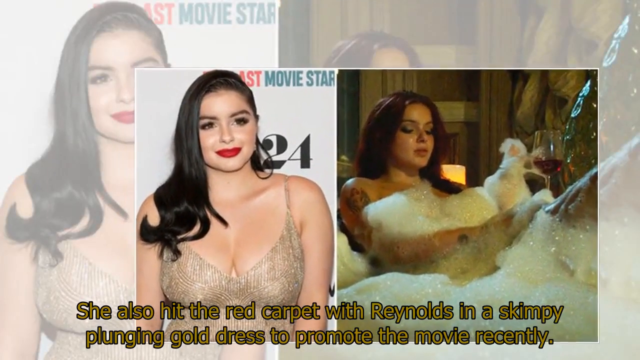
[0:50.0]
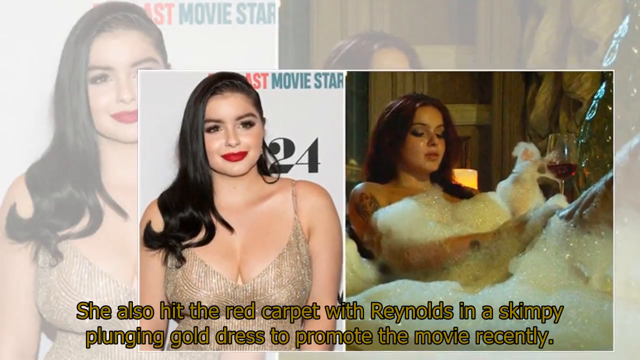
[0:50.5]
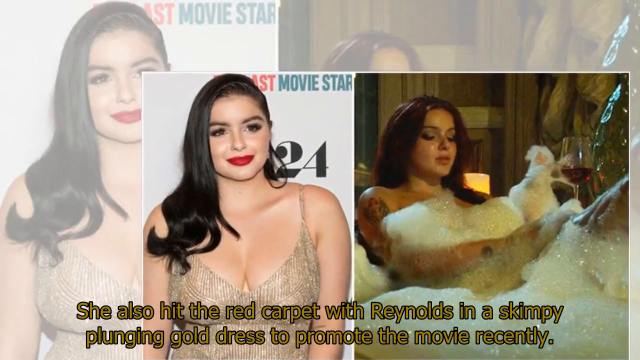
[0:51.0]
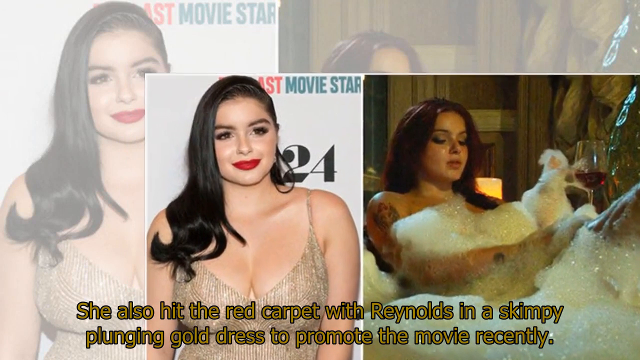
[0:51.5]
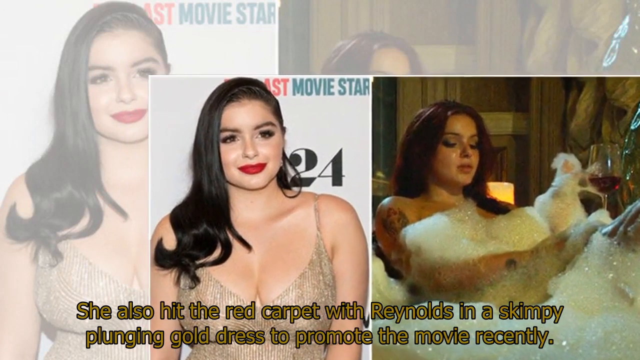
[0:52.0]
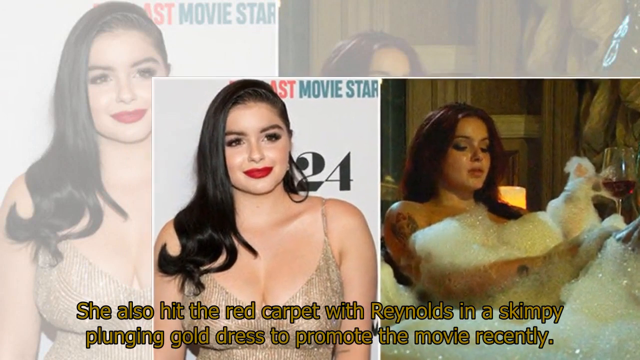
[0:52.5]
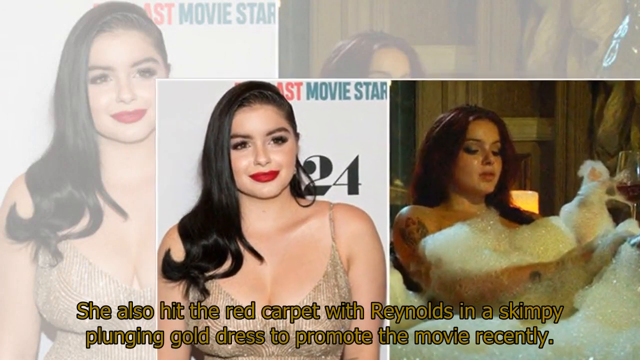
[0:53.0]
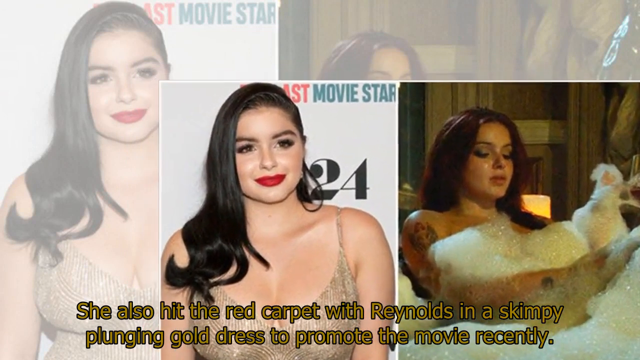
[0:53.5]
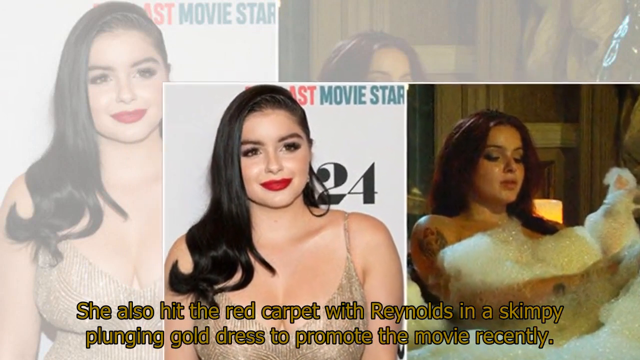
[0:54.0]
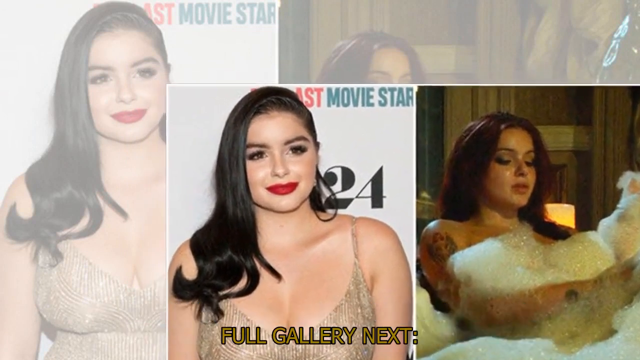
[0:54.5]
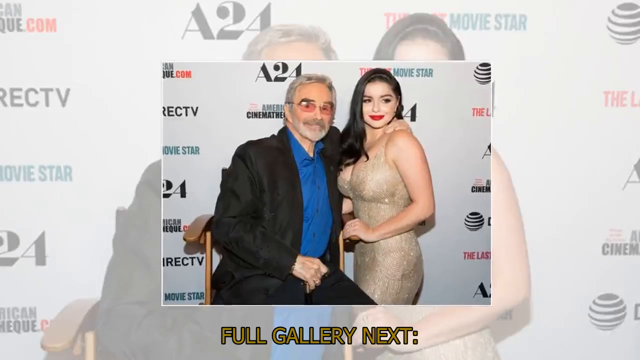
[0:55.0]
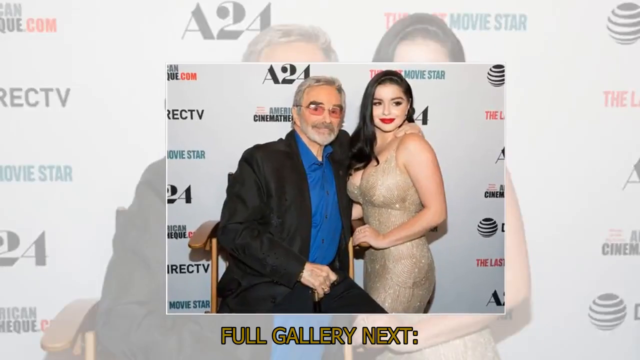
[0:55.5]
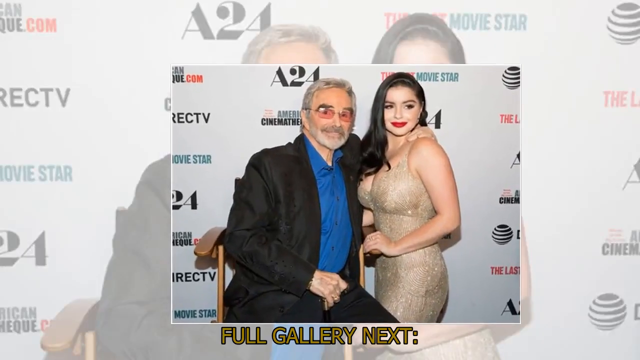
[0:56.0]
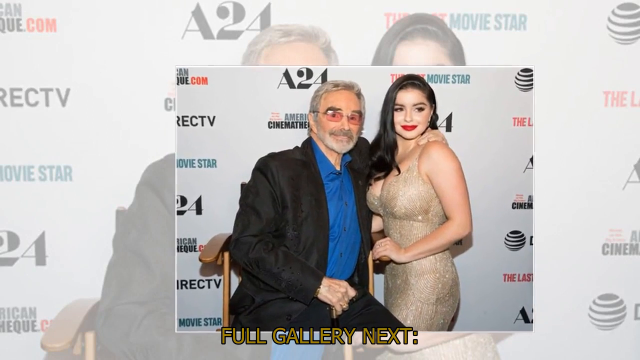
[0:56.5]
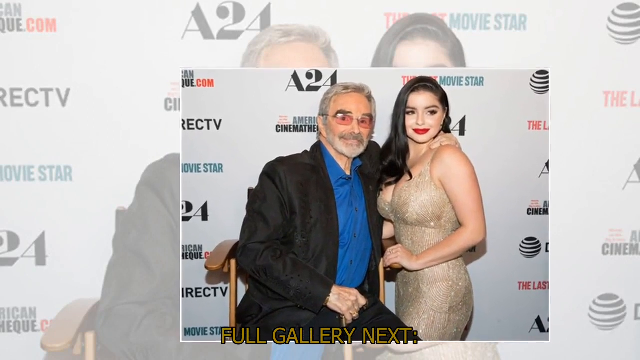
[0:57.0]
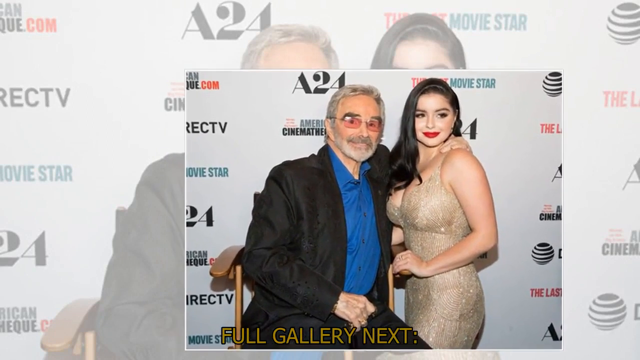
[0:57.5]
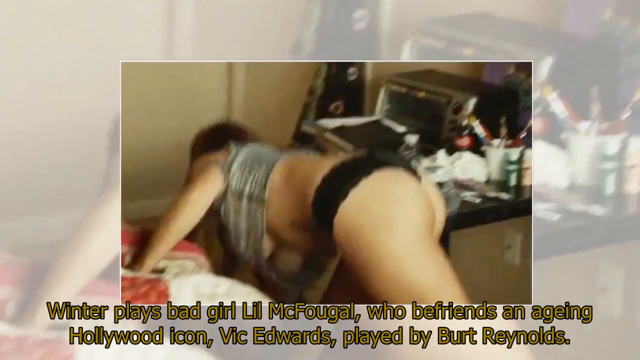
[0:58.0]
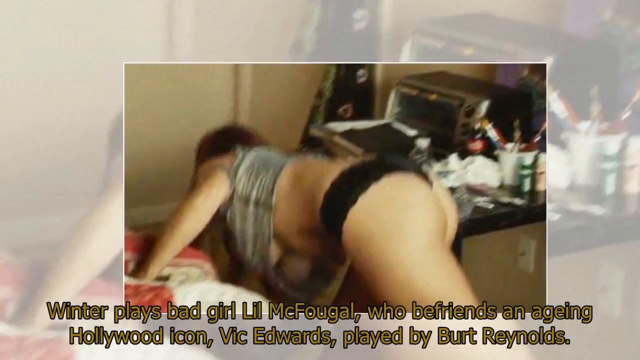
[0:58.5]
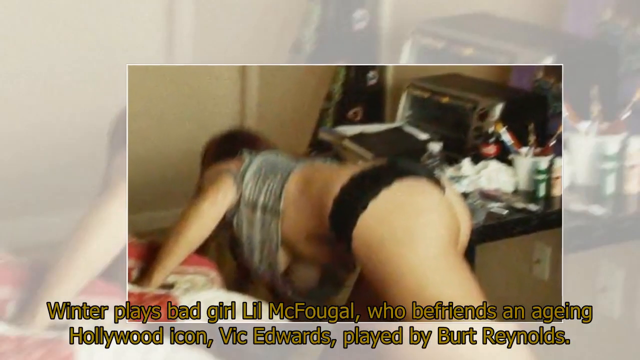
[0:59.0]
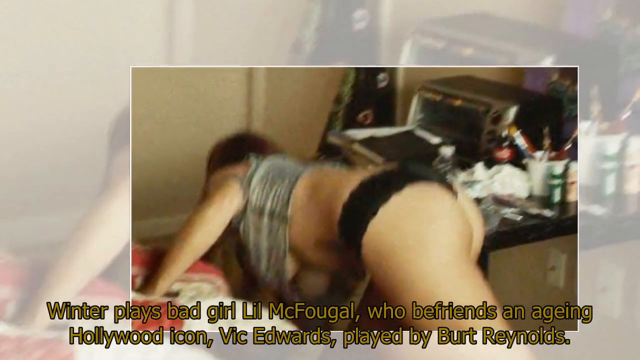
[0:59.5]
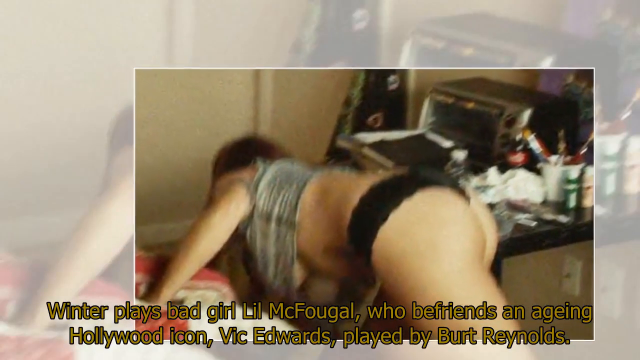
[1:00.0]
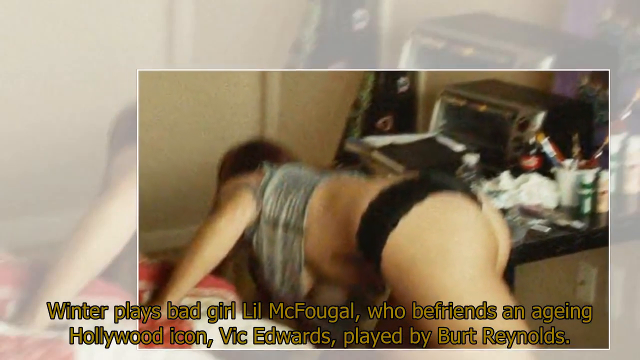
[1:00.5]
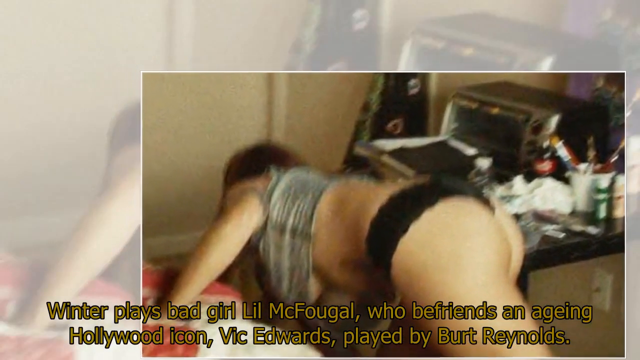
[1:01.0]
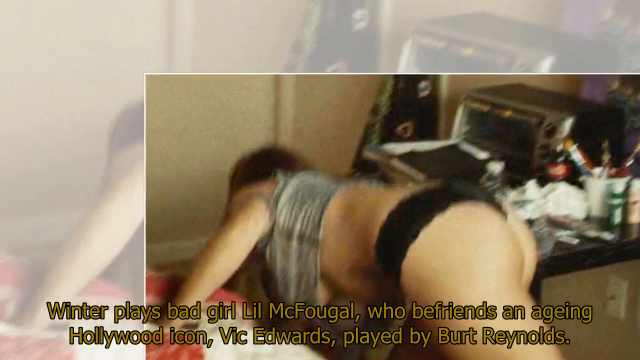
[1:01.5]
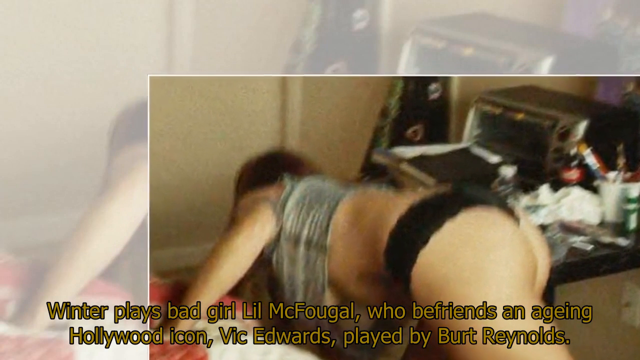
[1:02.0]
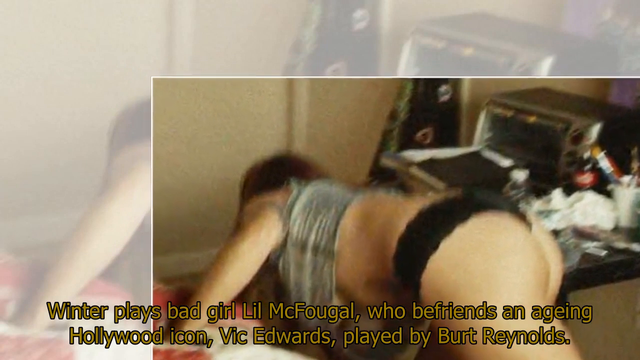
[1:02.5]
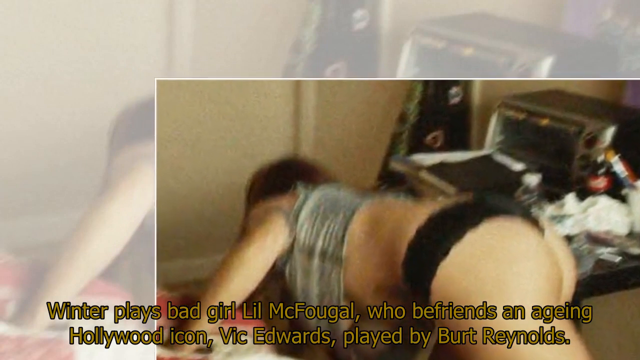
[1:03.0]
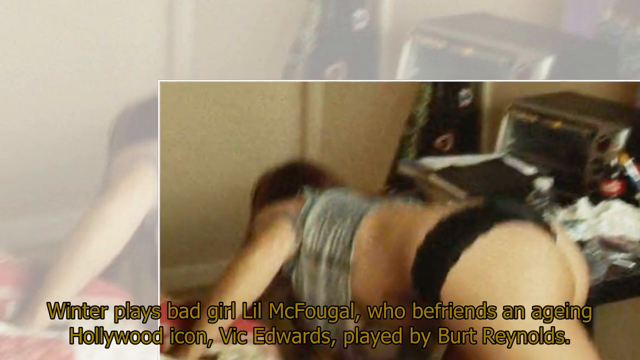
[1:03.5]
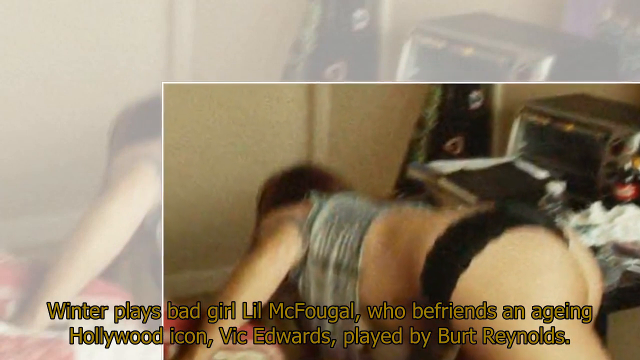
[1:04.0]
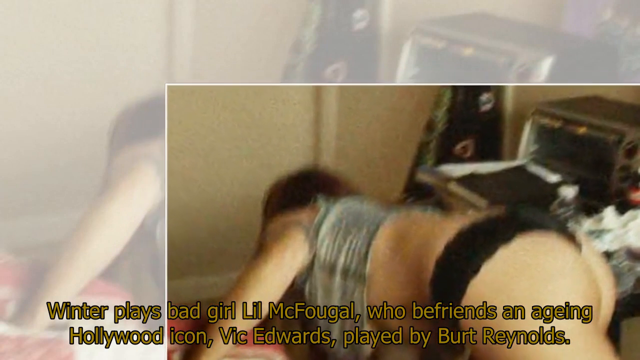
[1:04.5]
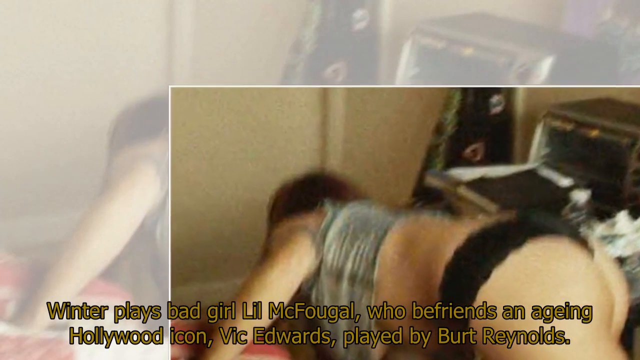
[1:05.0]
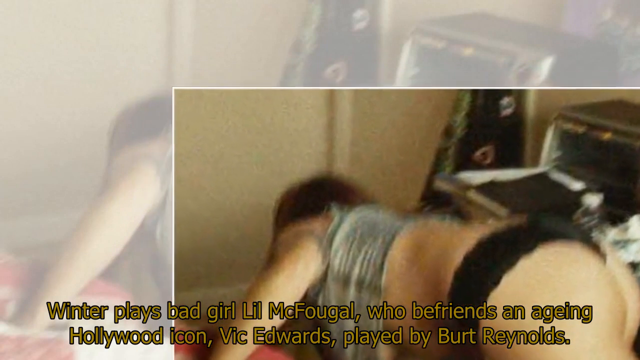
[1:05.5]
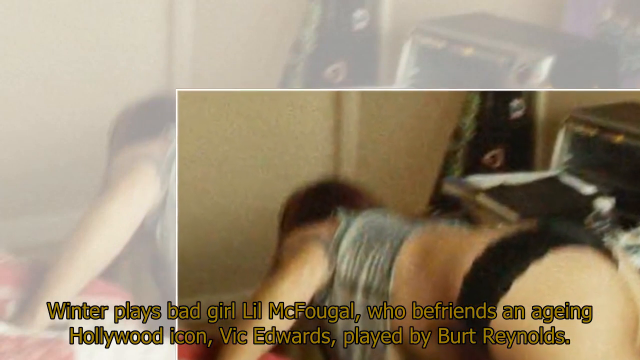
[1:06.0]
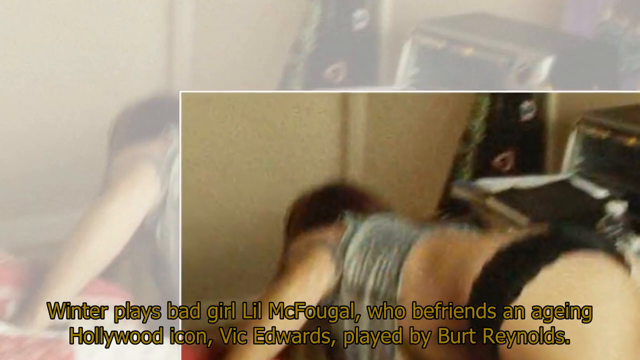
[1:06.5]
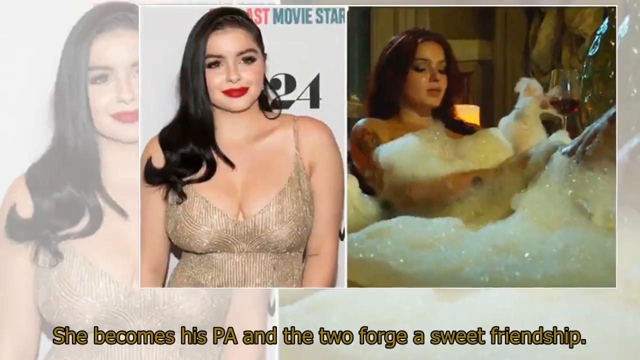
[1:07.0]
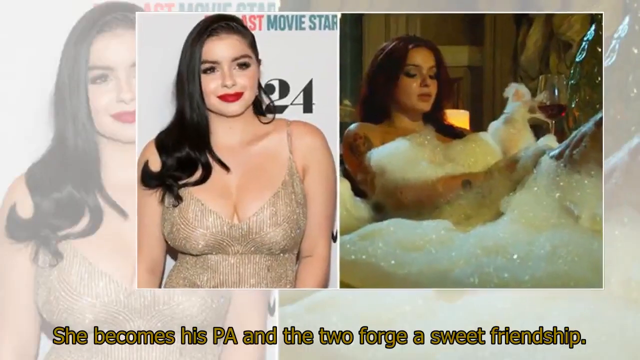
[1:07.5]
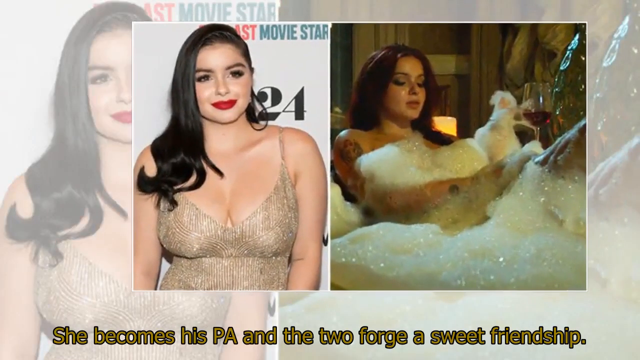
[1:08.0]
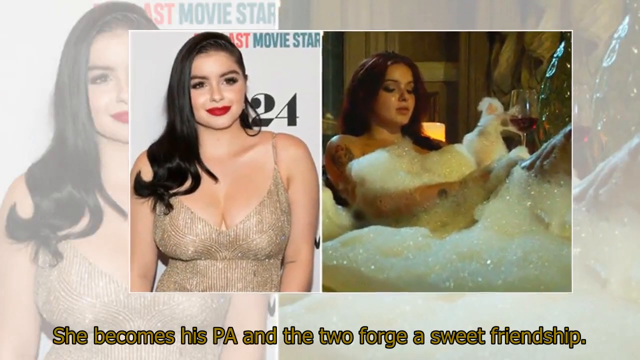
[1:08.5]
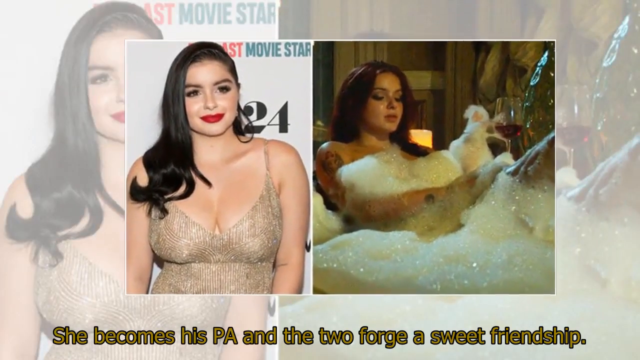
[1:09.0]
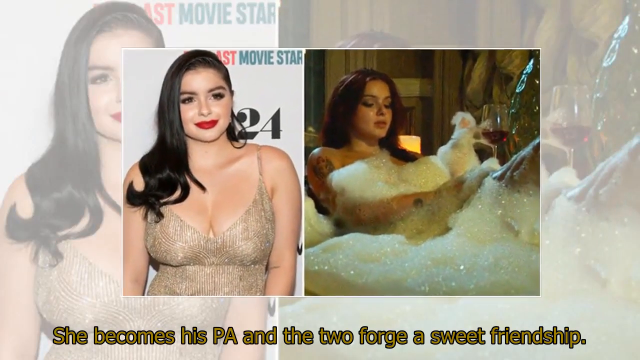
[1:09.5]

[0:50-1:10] The photo of her with her breasts exposed is shown again: she is bending, wearing black pants, in a room. Text describes the role she plays in the movie. Her pictures continue, including the photo with the old man.